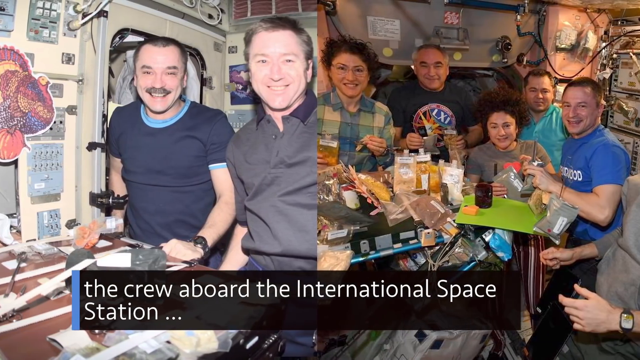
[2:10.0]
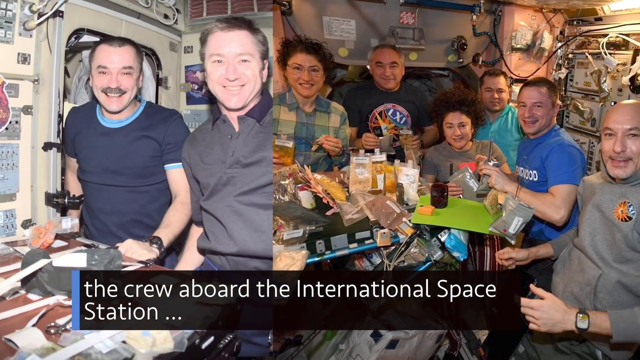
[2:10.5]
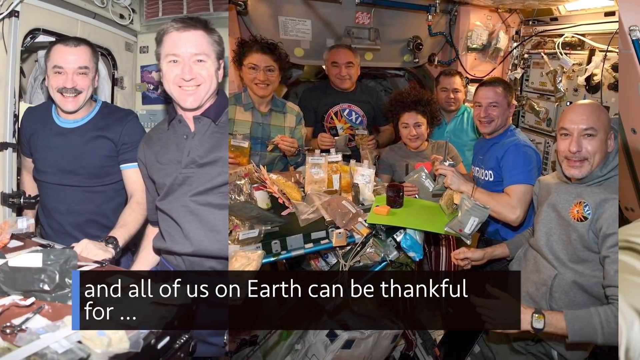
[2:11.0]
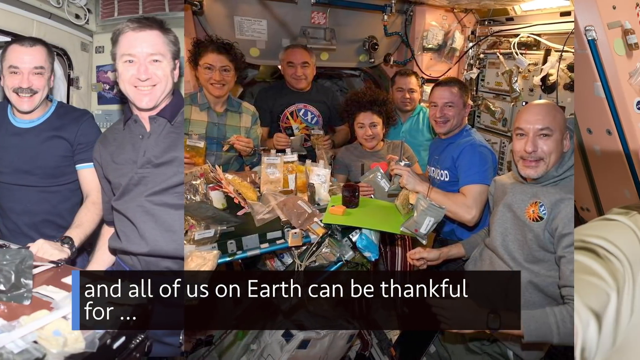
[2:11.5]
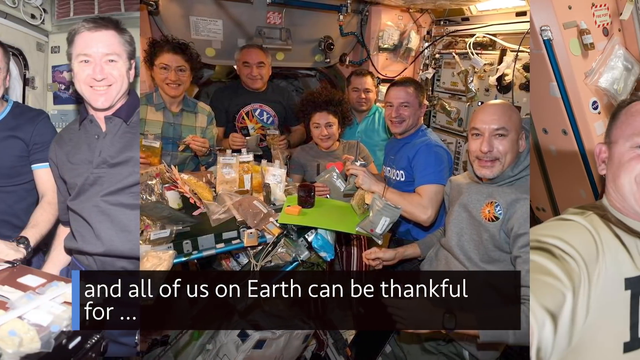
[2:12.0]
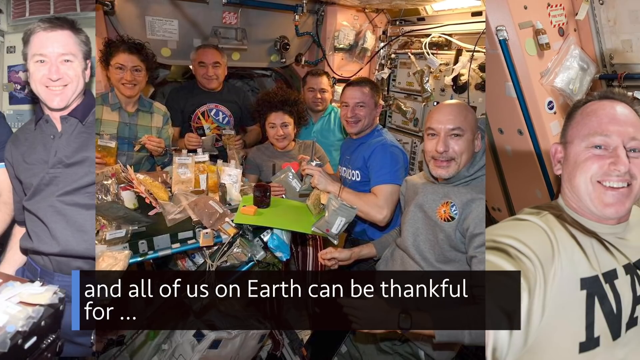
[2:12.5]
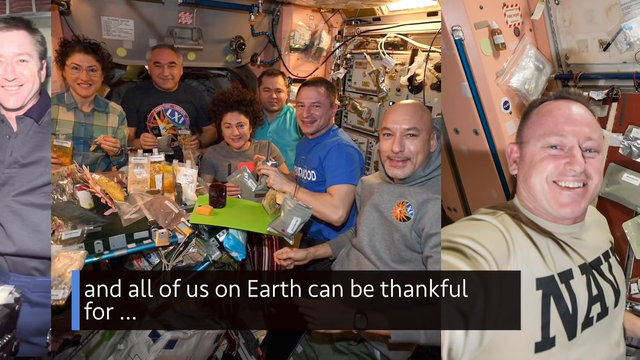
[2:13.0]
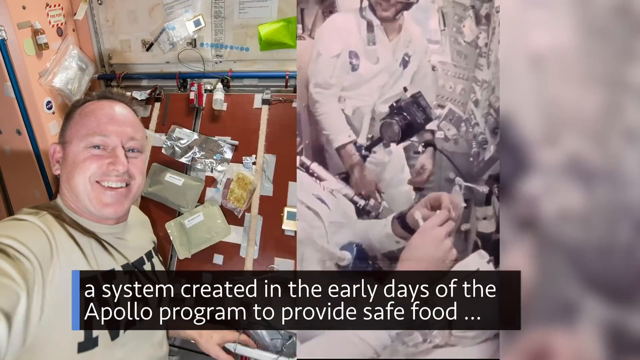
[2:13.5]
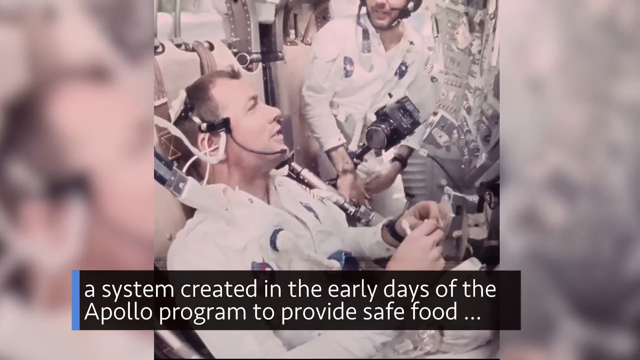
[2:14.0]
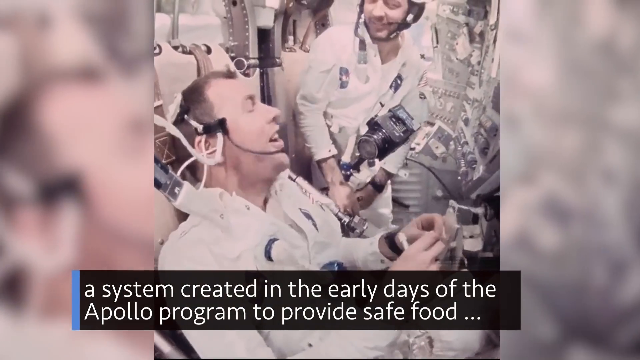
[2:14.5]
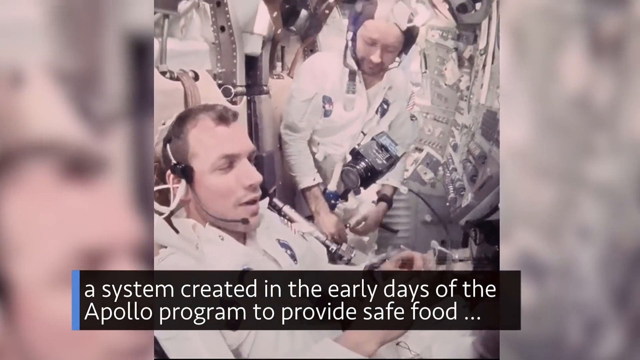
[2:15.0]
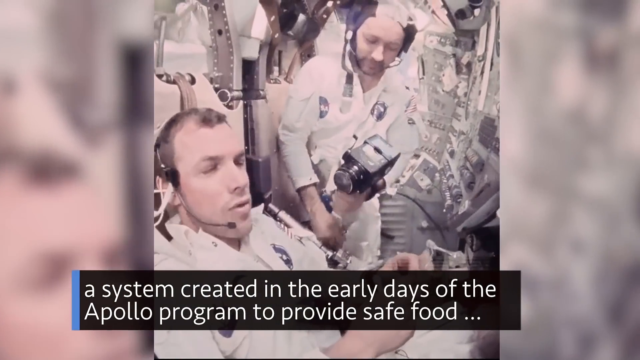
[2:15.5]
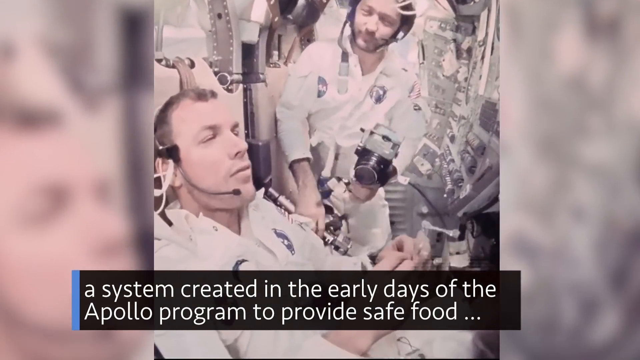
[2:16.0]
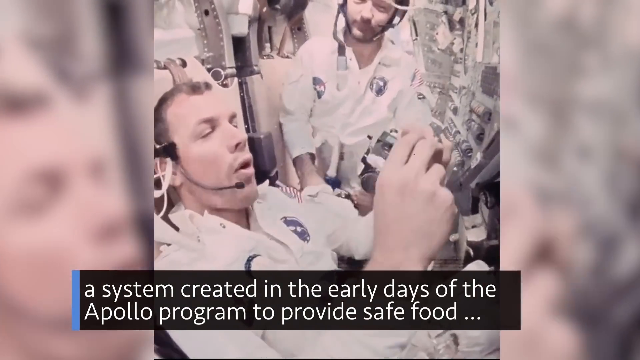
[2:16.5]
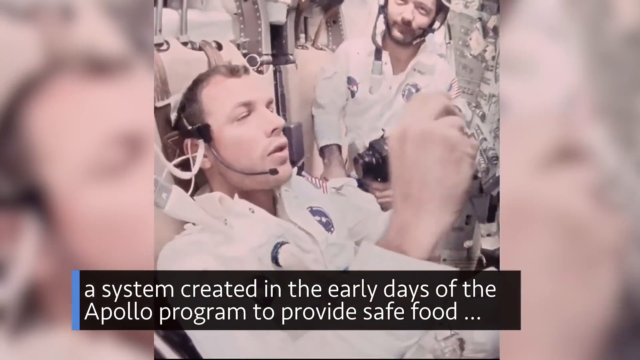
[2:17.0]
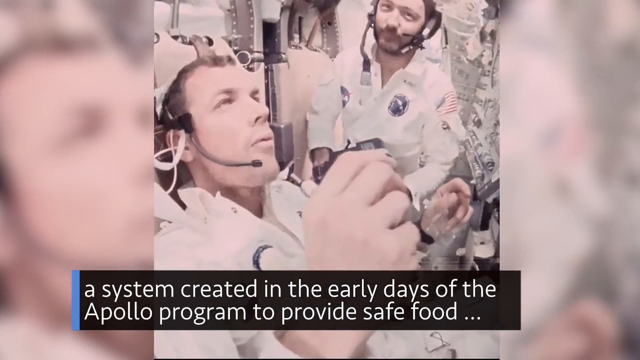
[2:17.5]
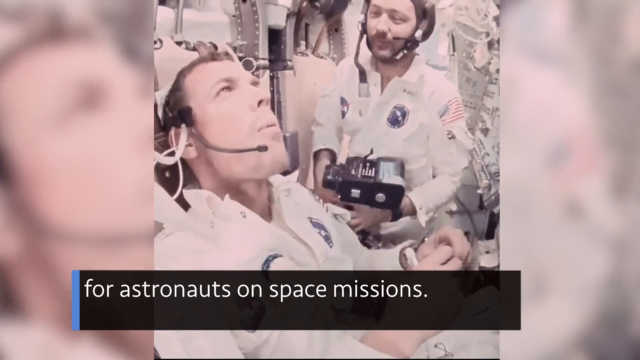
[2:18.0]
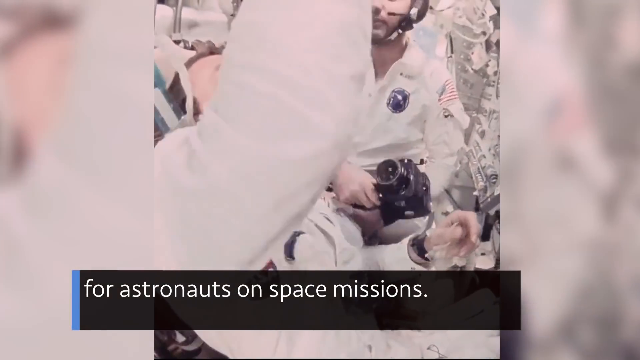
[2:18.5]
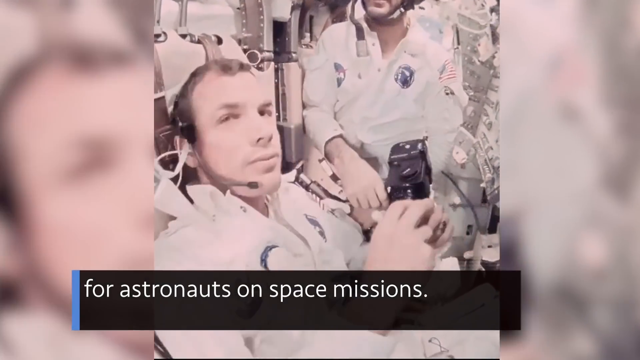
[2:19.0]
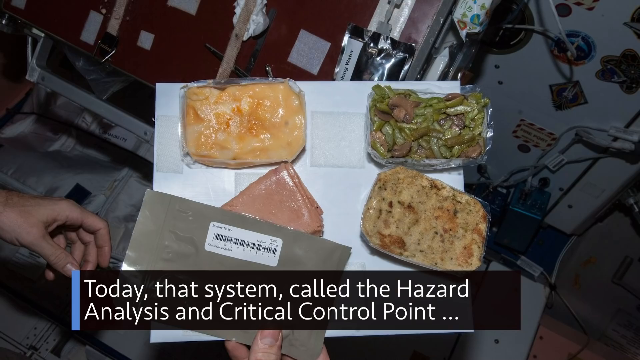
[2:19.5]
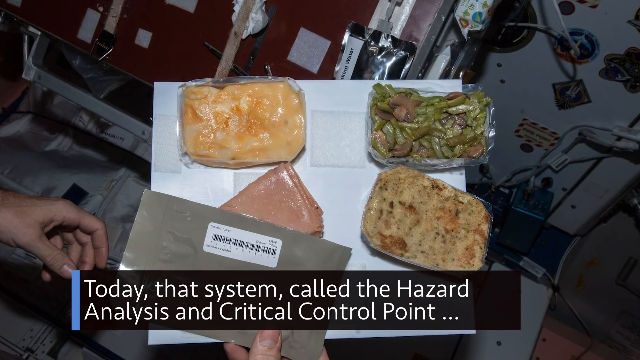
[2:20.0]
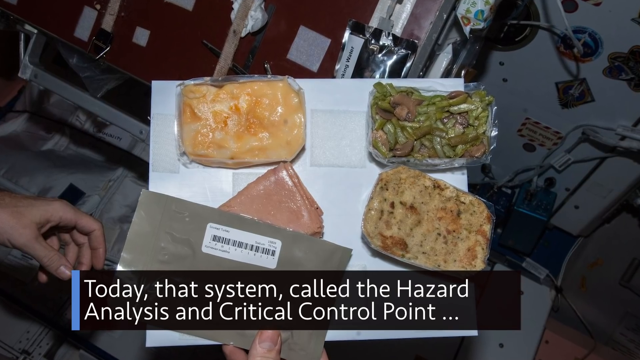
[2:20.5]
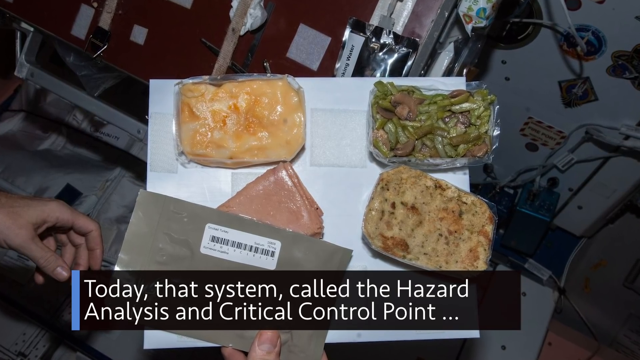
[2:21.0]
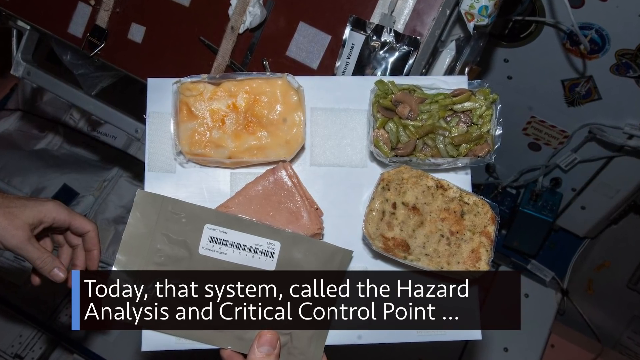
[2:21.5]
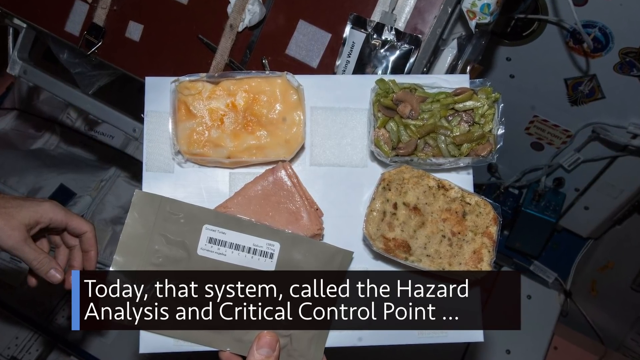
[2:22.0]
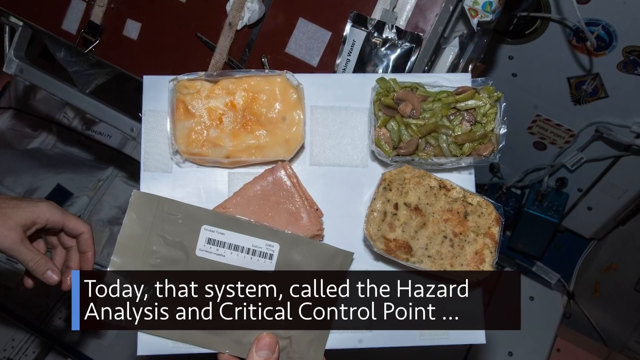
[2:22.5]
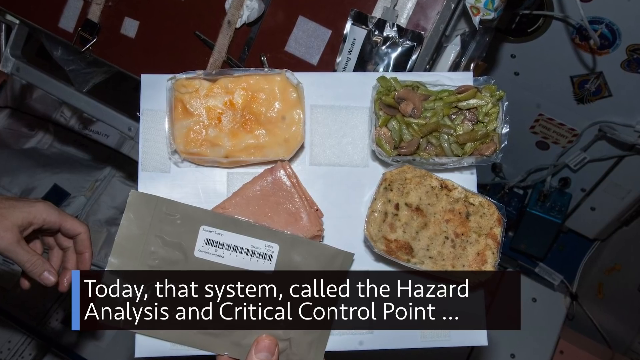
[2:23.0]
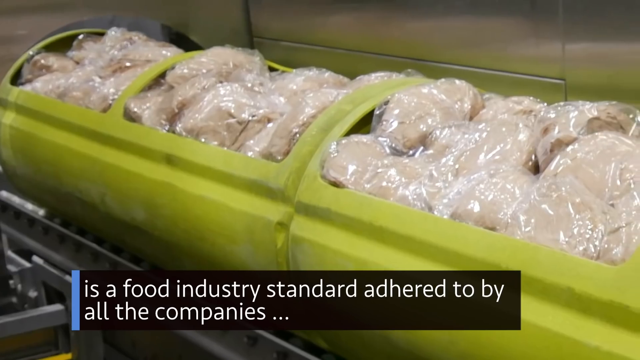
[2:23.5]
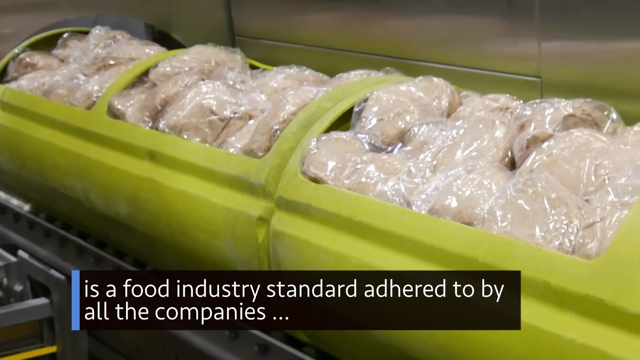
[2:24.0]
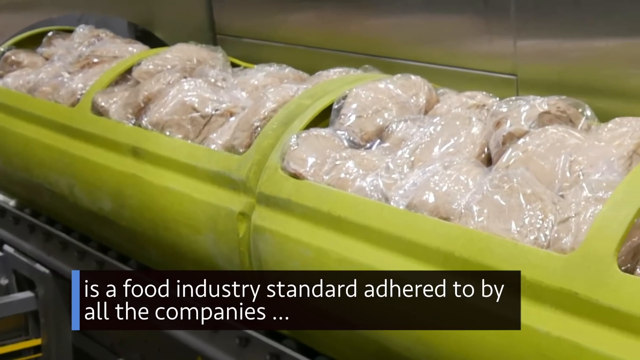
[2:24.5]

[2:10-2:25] On-screen text reads "the system created in the early days of the Apollo program to provide safe food for astronauts on space missions. Today, that system, called the Hazard Analysis and Critical Control Point, is a food industry standard adhered to by the companies." Pictures slide by of people on the space station eating, then a couple of astronauts sitting in a ship eating food. Next is a picture of shrink-wrapped food on a table with the Hazard Analysis and Critical Control Point name above it, then a tube with open spots in the top holding packages of food, which looks like chicken.